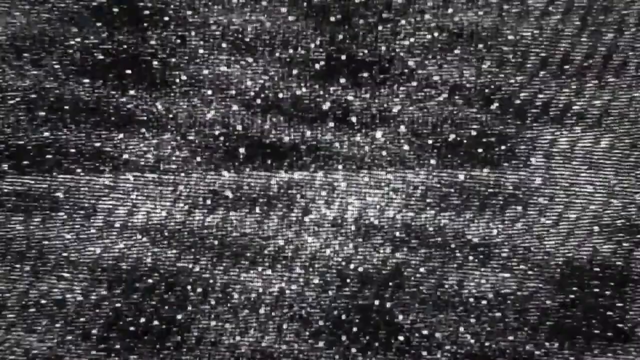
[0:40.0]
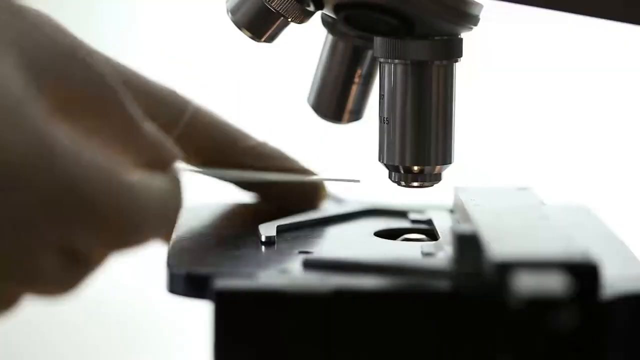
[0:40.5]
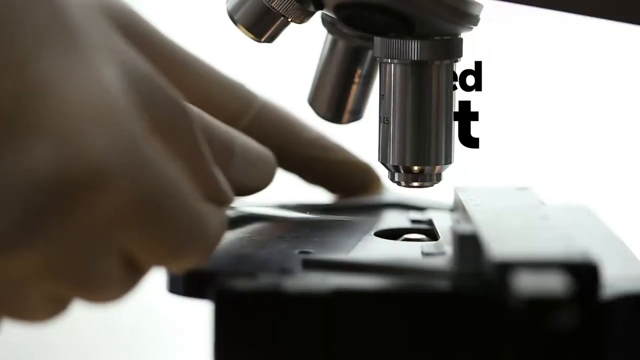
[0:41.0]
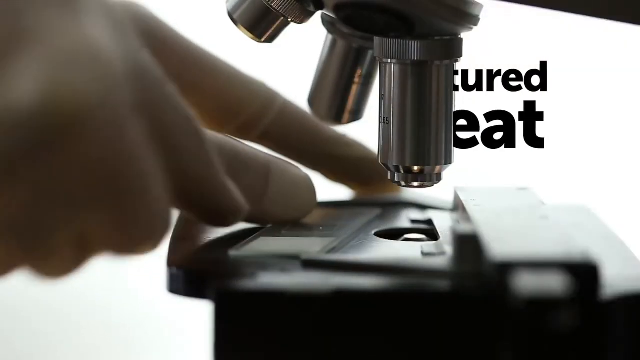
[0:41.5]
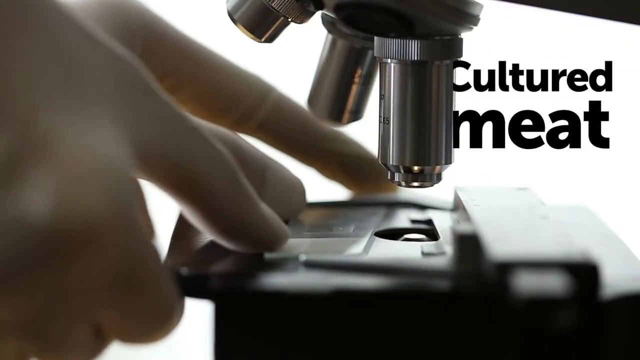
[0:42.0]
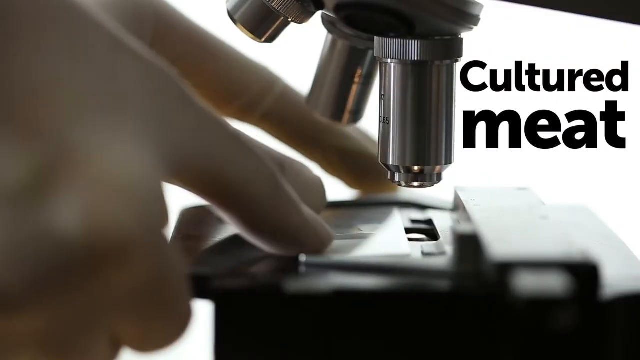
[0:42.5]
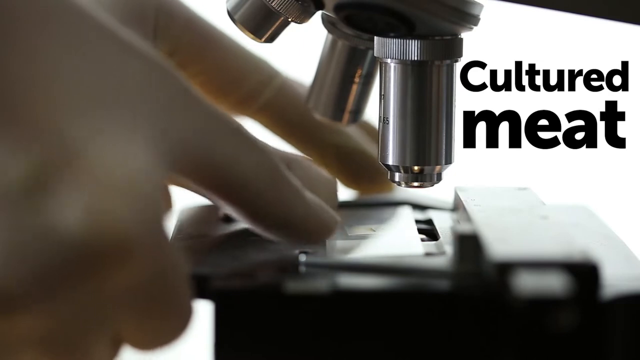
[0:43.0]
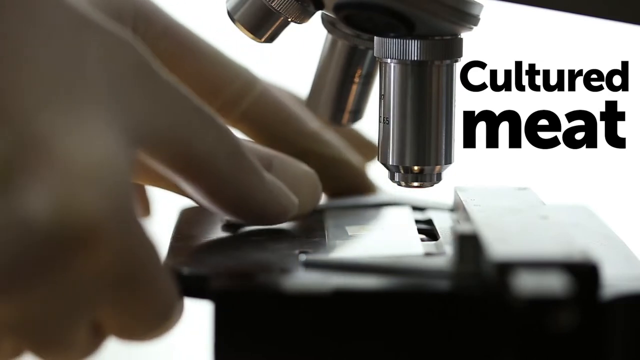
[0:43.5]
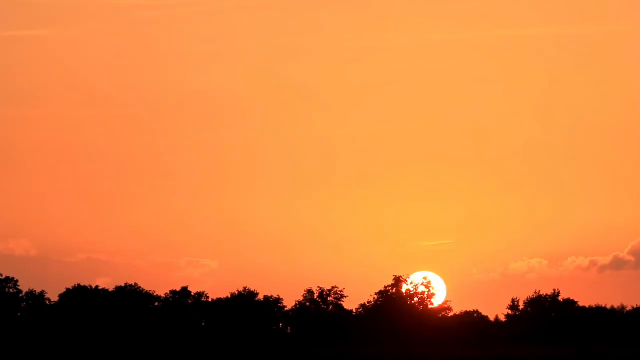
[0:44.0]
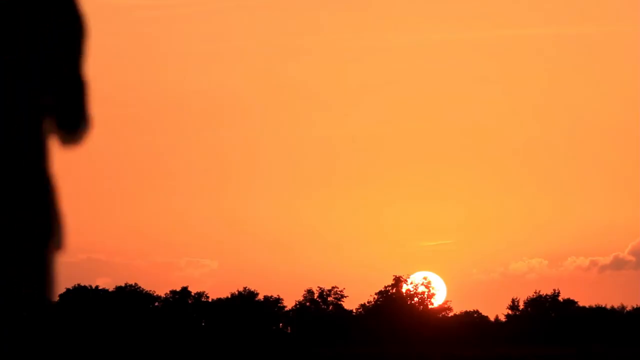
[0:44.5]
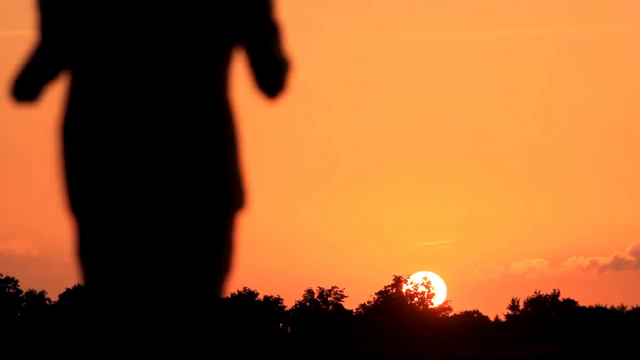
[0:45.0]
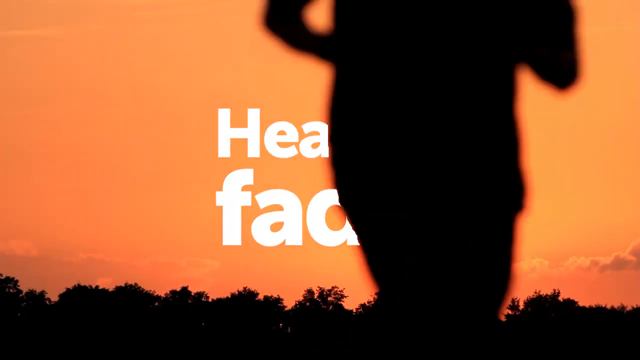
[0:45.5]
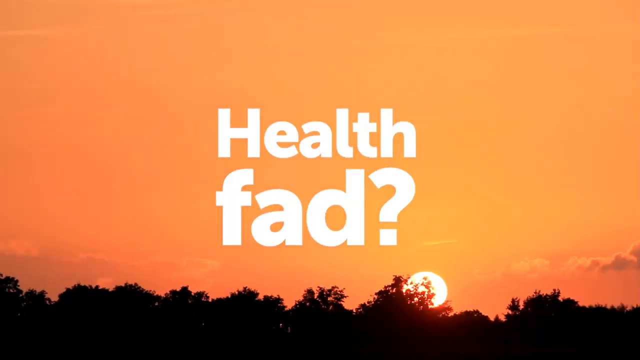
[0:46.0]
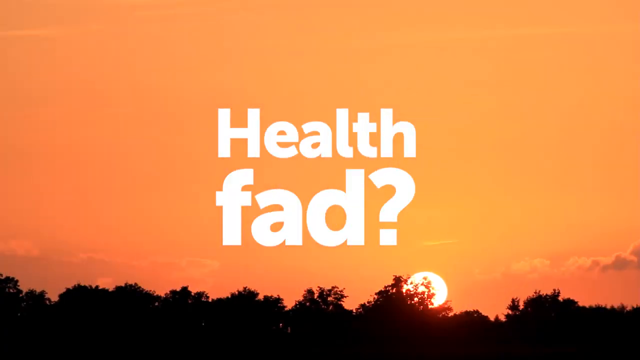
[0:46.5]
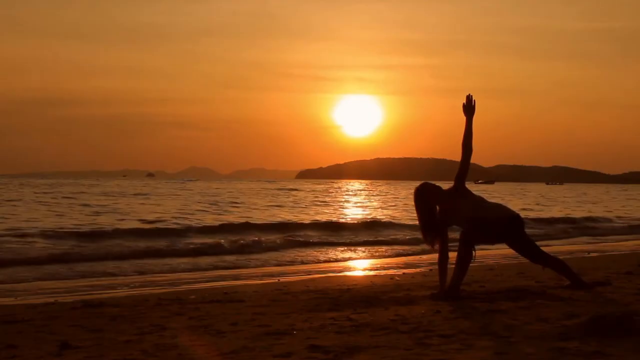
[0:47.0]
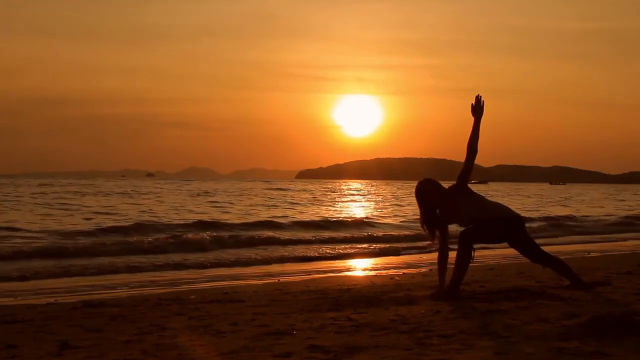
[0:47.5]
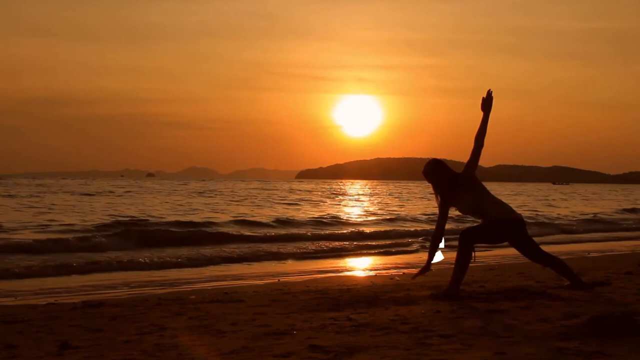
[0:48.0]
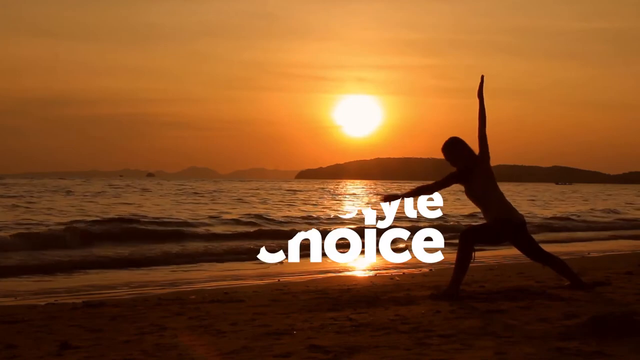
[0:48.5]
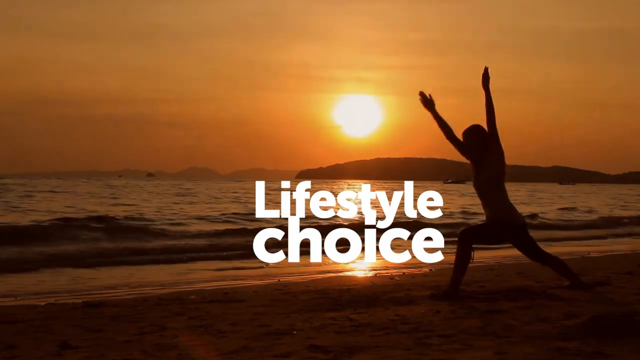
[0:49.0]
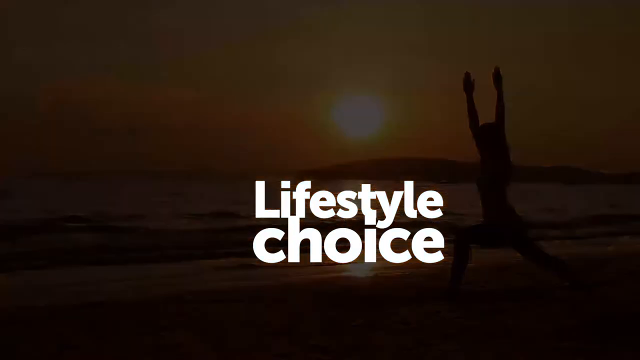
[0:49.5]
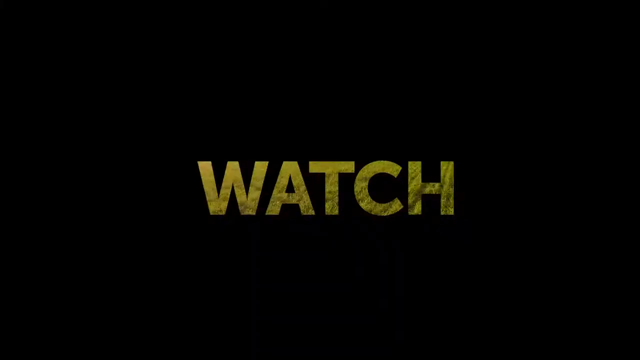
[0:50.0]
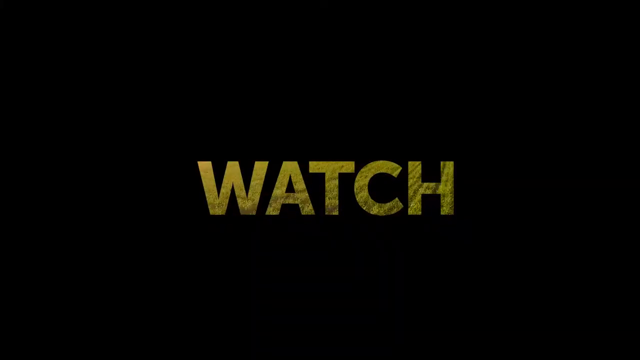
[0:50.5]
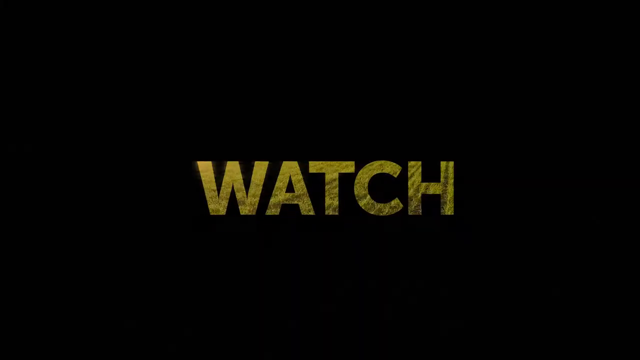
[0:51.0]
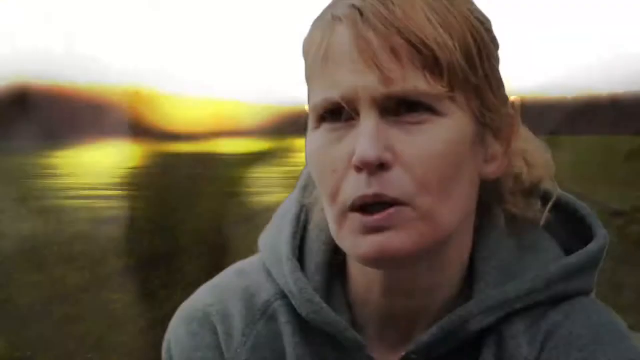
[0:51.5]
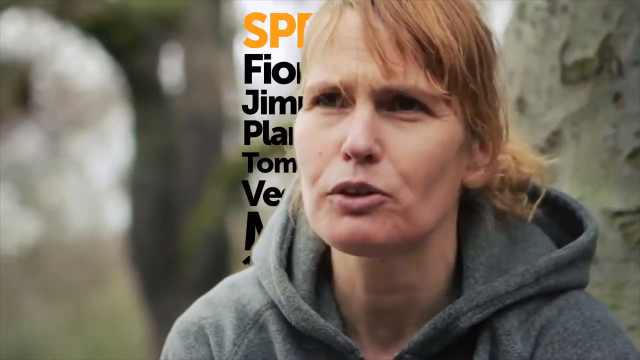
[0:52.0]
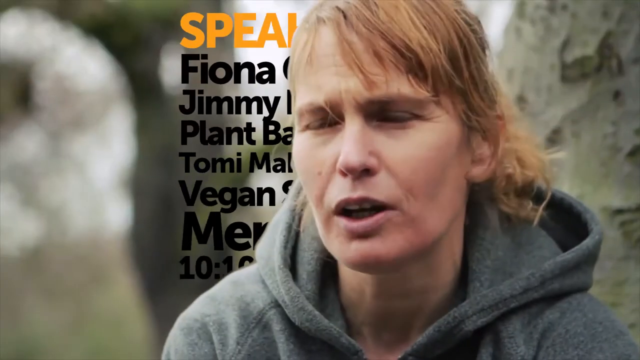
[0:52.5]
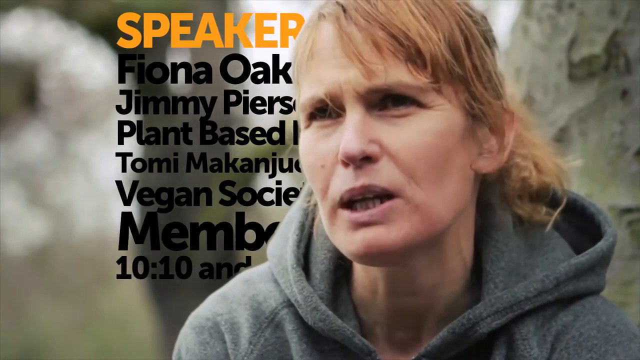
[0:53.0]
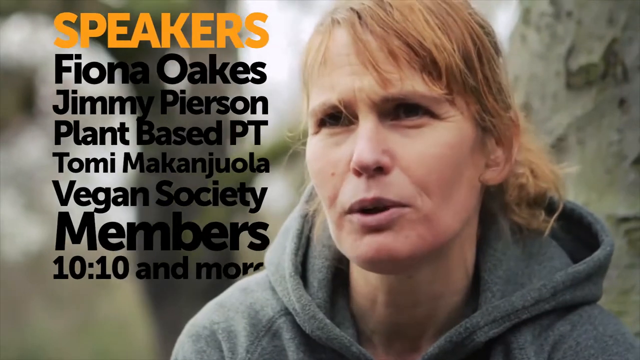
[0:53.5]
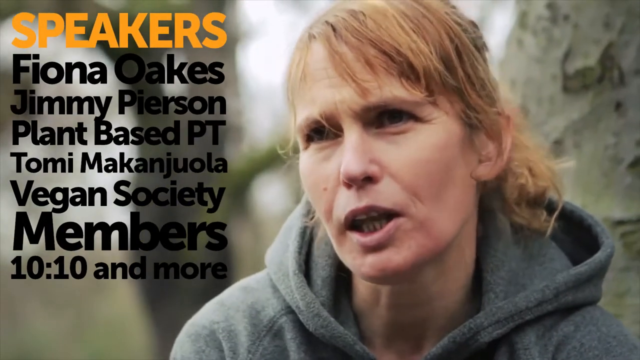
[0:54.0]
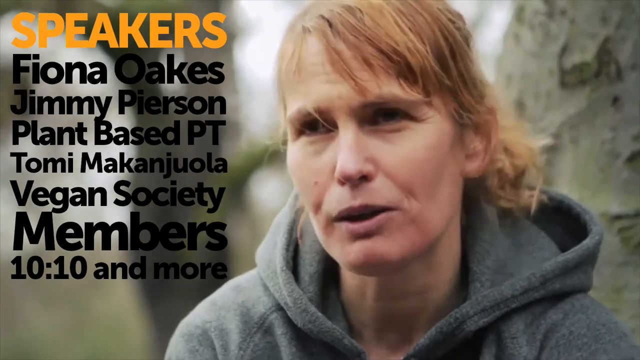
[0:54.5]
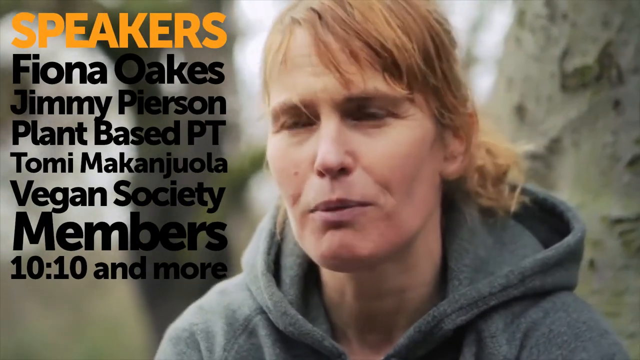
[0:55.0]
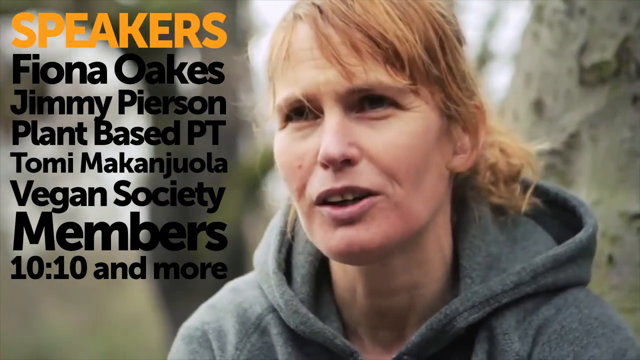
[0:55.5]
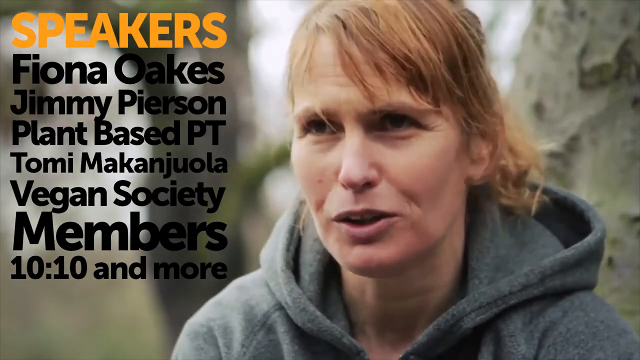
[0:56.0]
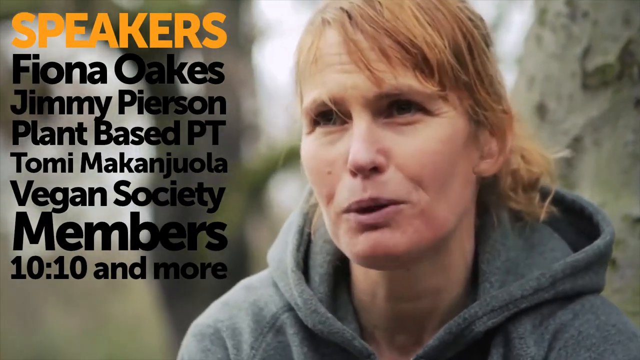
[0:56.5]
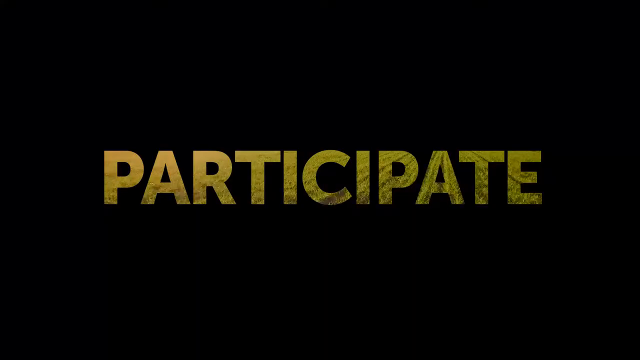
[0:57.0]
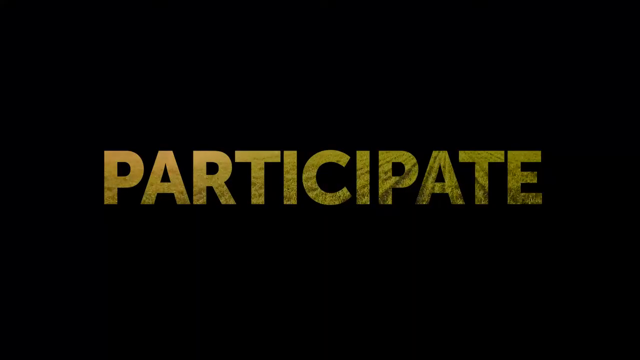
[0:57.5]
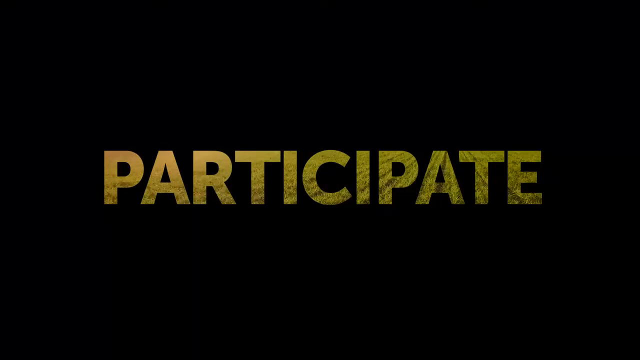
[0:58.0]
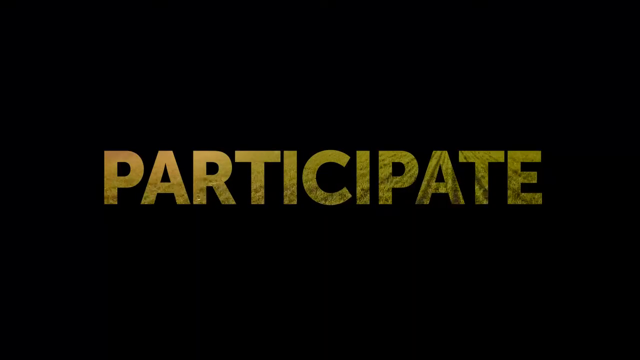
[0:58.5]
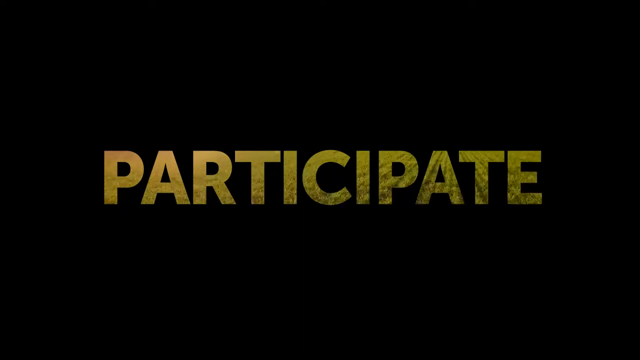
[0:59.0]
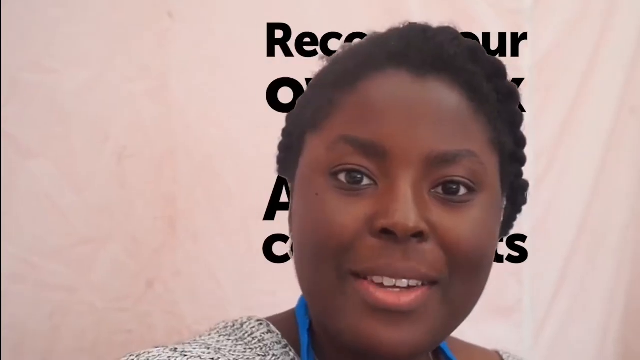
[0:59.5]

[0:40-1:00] A black-and-white screen gives way to a microscope in what looks to be a biology lab, where a specimen is slid under the microscope and the title reads "cultured meat." Someone runs with a sunrise or sunset behind them, the sky orange and yellow, and once the shadow passes the text "health fad" appears. Someone then works out and stretches on the beach, with the sun shining off the water and onto the shore. Text says to "watch and actually see." Many different speakers are listed: Fiona Oaks, Jimmy Pearson, Plant Based PT, Tomi Makanjwola, Vegan Society members, 1010 and more. A lady is talking, and the shot switches to another person who is talking.